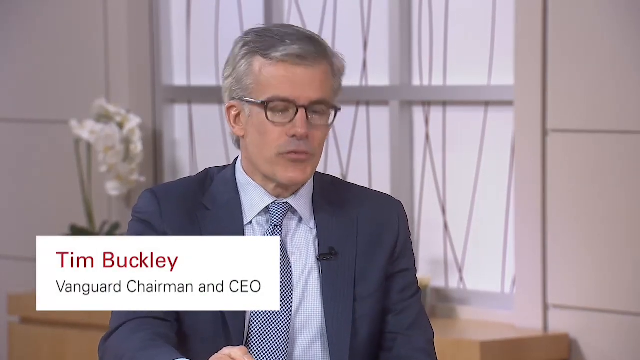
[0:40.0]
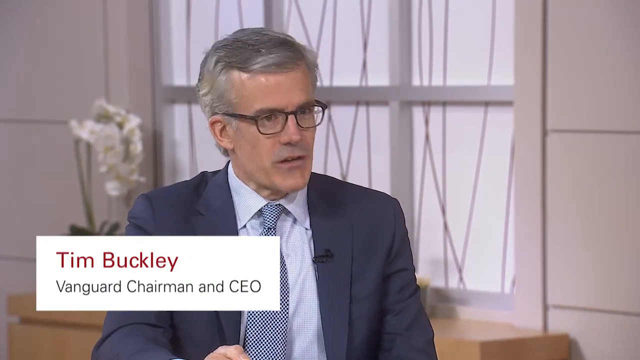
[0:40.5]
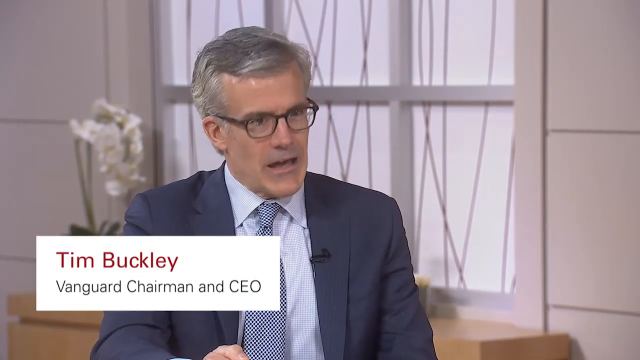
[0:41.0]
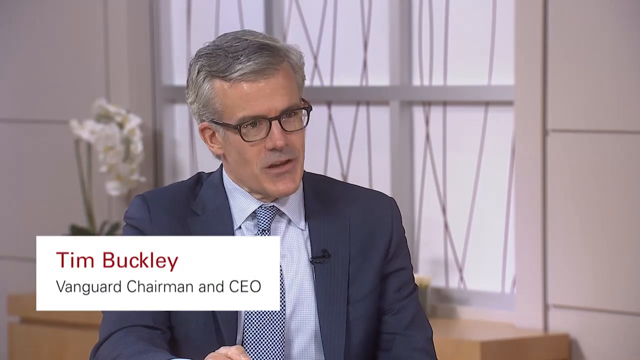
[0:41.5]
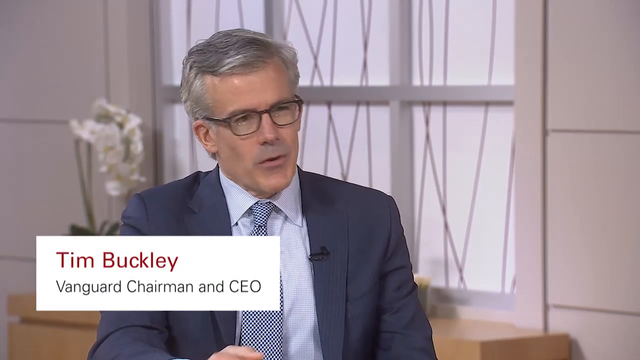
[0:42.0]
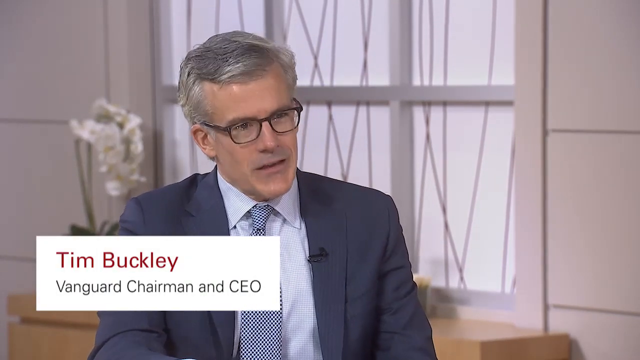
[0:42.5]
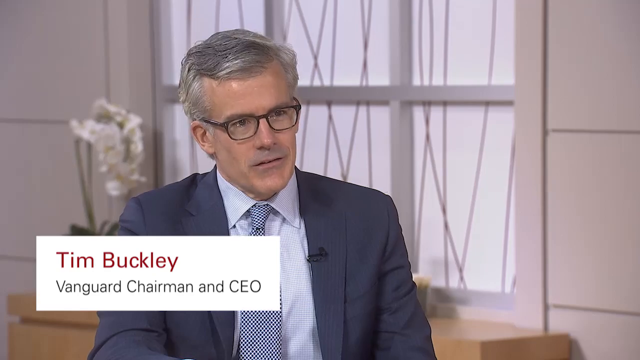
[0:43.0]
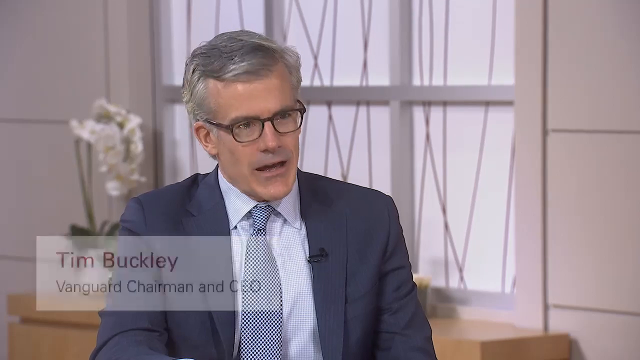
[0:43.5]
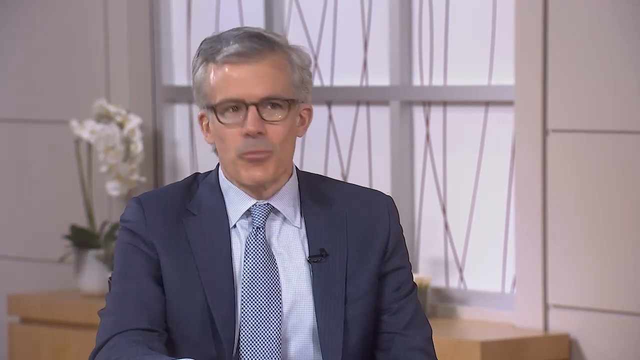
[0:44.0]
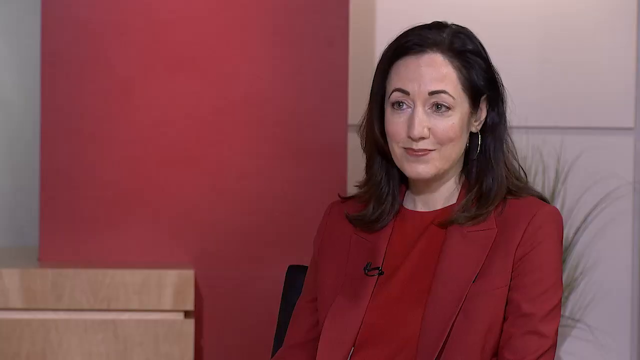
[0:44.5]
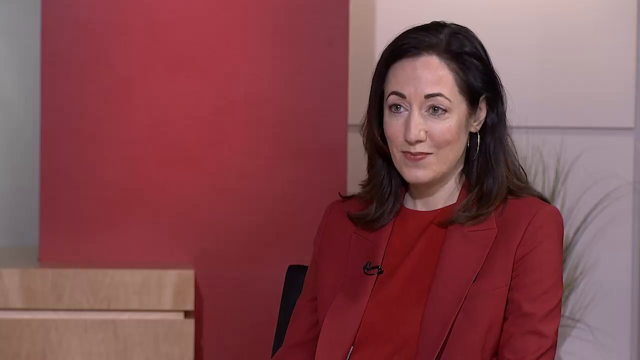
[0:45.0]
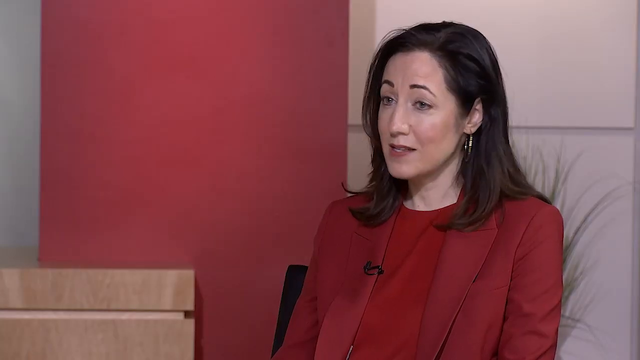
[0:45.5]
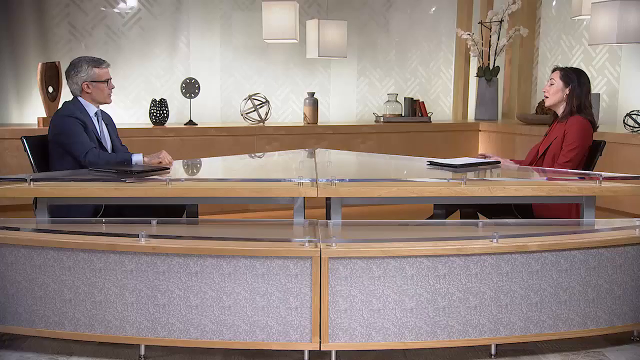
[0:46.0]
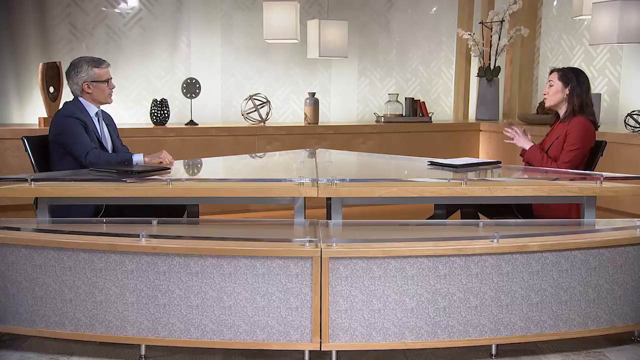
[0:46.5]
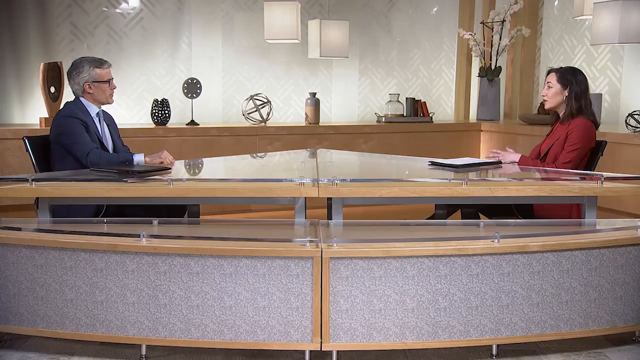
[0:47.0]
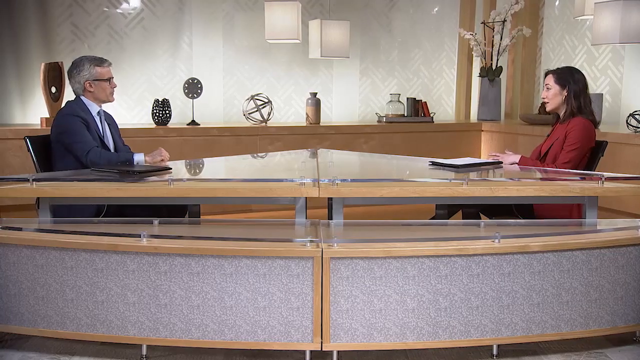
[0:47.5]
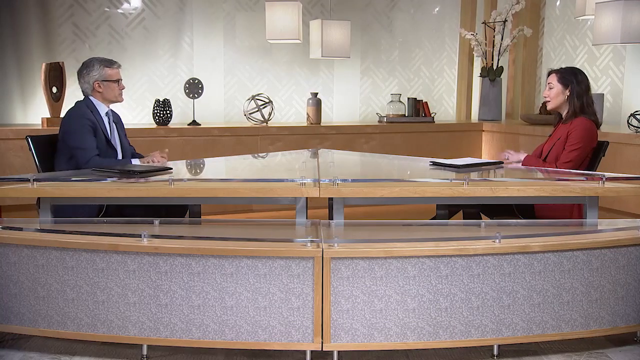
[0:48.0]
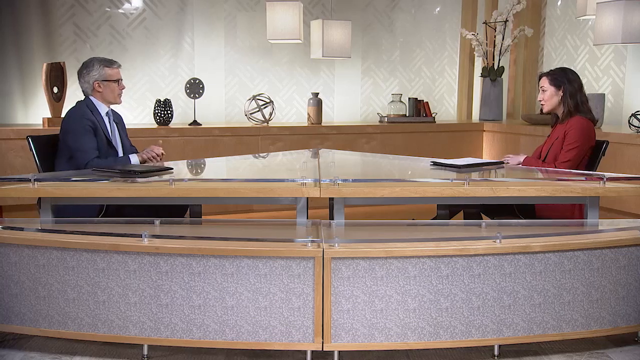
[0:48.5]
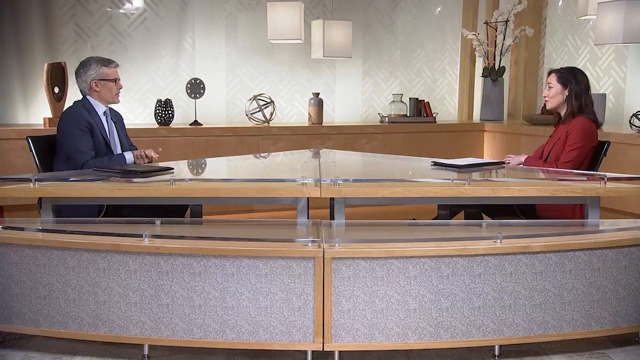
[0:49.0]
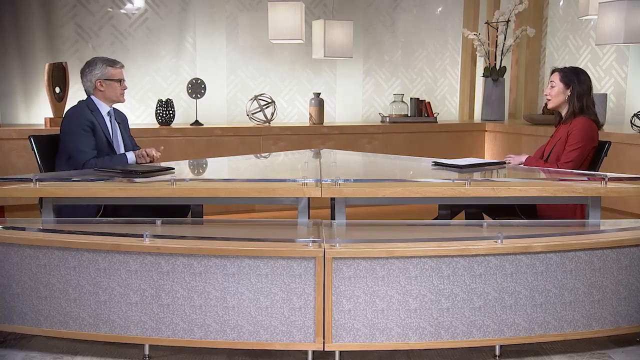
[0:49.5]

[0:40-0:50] The camera focuses on Tim Buckley, Vanguard chairman and CEO, as he talks. It then cuts back to the woman in red, then to a wide view, and finally back to Tim Buckley.